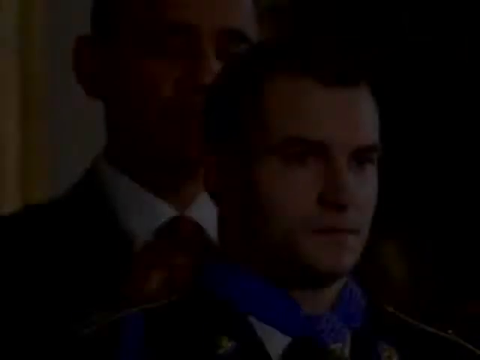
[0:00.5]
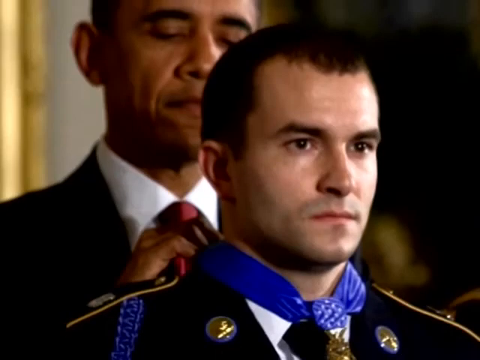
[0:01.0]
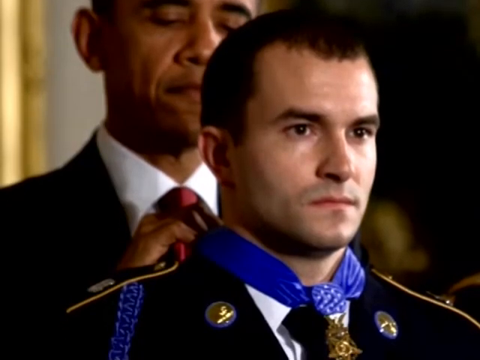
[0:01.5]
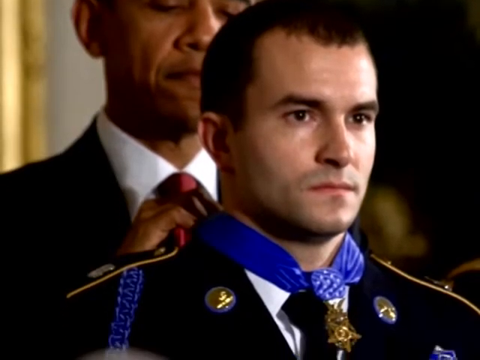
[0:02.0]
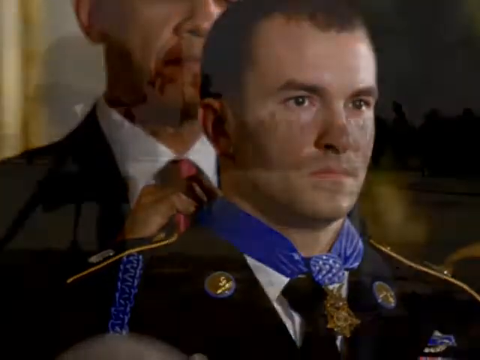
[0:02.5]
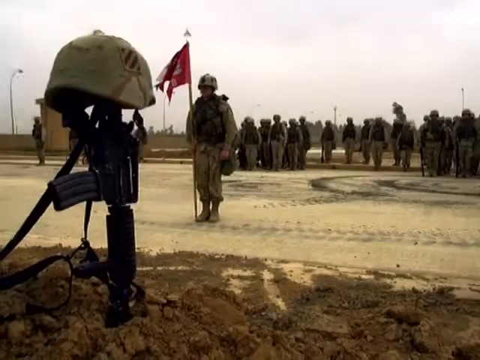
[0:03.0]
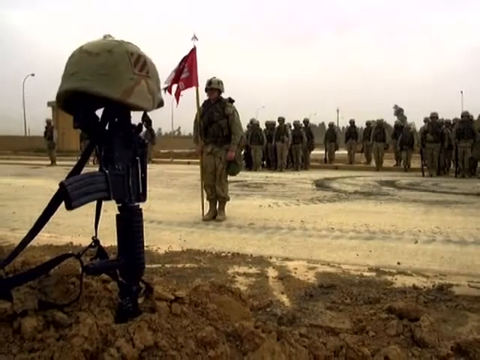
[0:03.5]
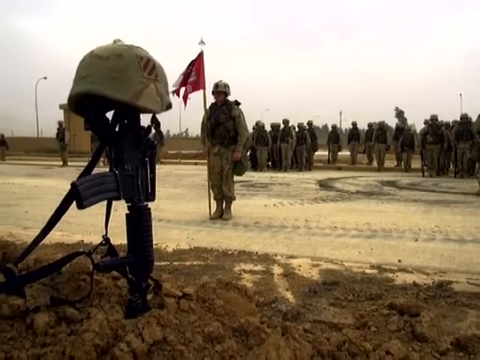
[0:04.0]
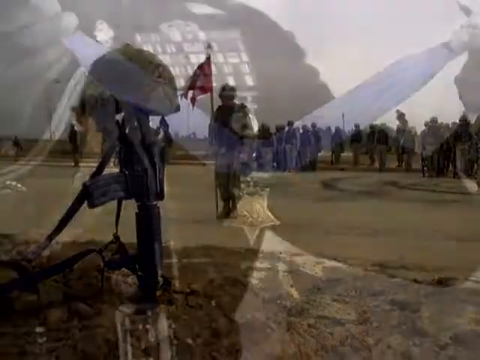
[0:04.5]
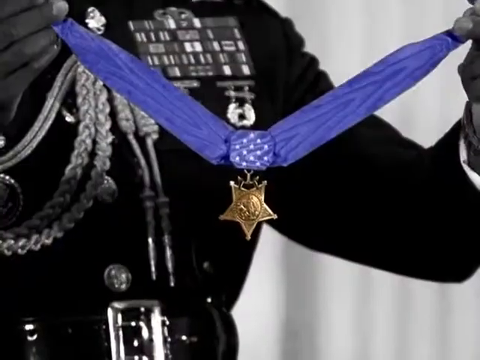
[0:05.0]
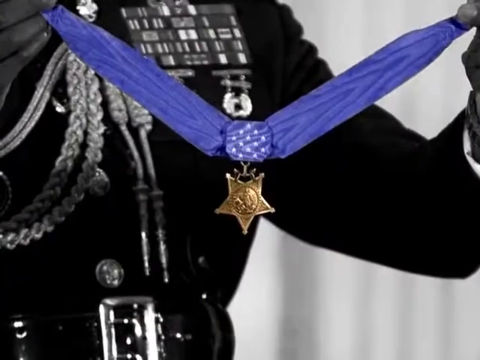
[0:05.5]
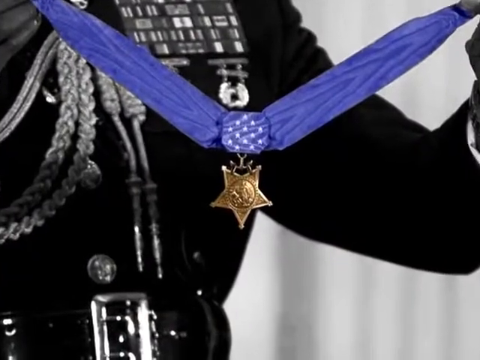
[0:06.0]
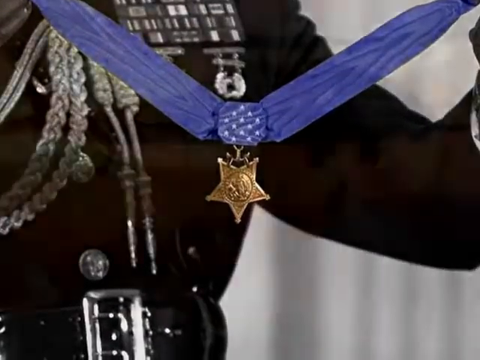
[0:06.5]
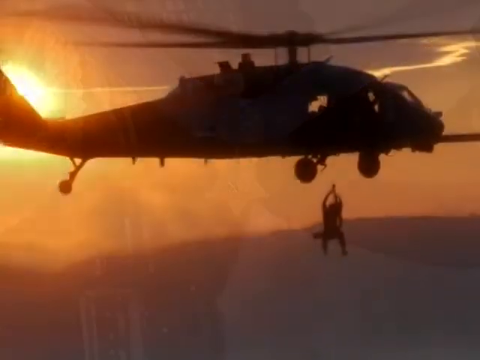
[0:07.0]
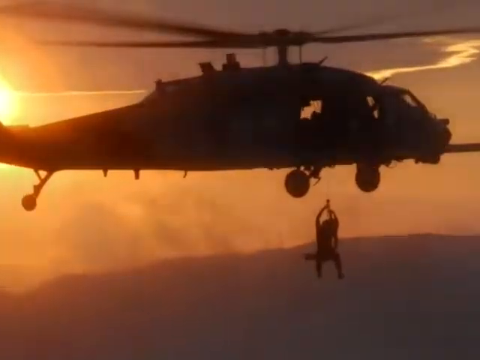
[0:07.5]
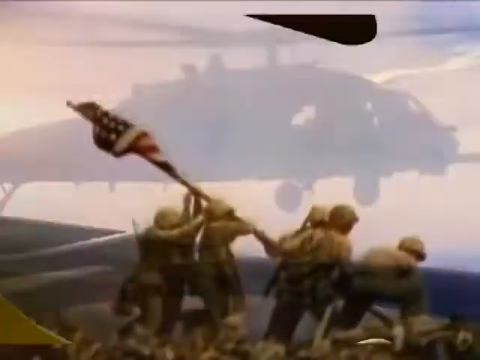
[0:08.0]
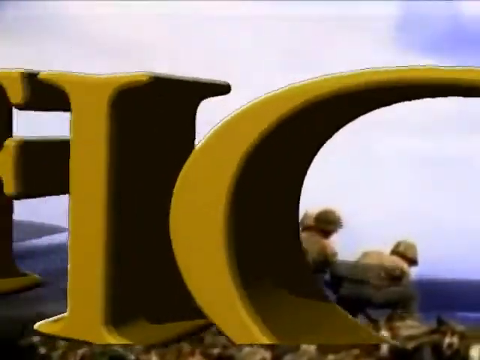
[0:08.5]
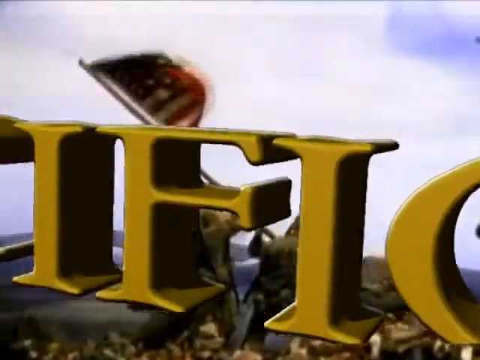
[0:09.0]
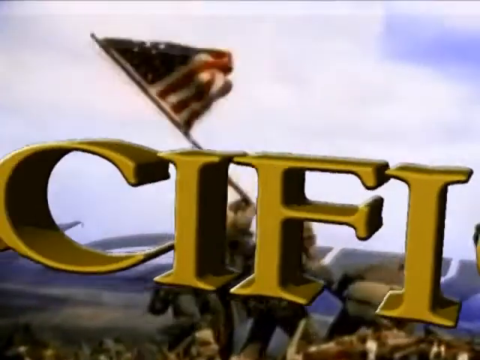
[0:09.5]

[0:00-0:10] A picture shows a man with Obama standing behind him, putting a blue ribbon-like item on the man's throat; the man seems as if he might be in the military. Next comes a photo of some military men, along with a gun and a hat, which looks like a tribute of some kind. A close-up shows the blue ribbon with a star-like medallion attached to it. A photo follows of a black helicopter with someone seemingly hanging from it. Text then pops up on the screen, and the footage appears to show military men walking with the American flag.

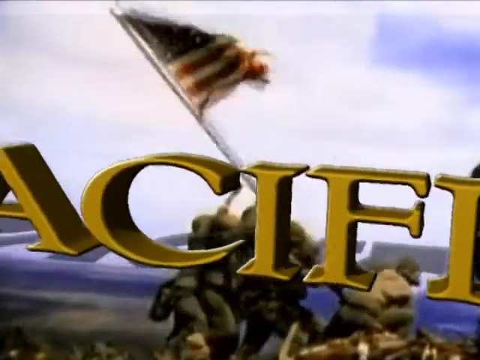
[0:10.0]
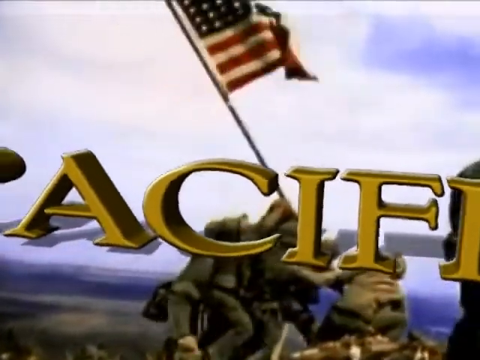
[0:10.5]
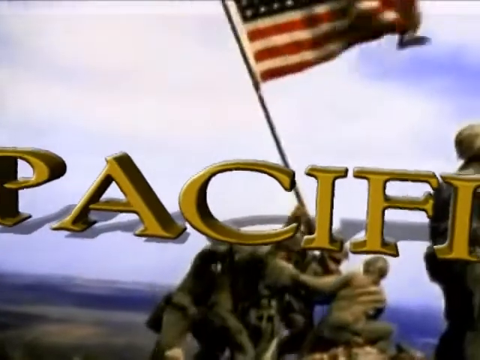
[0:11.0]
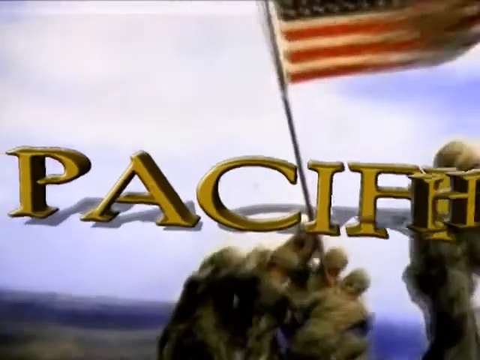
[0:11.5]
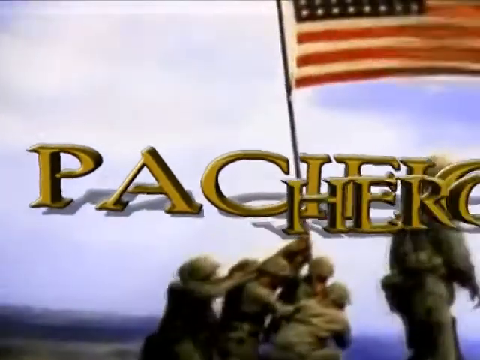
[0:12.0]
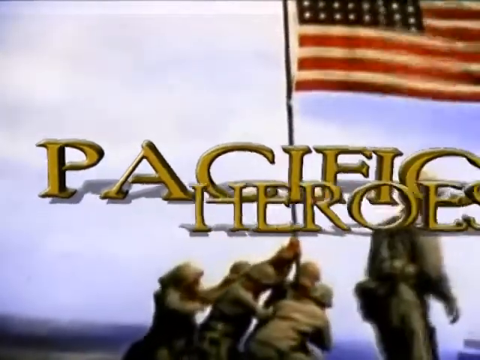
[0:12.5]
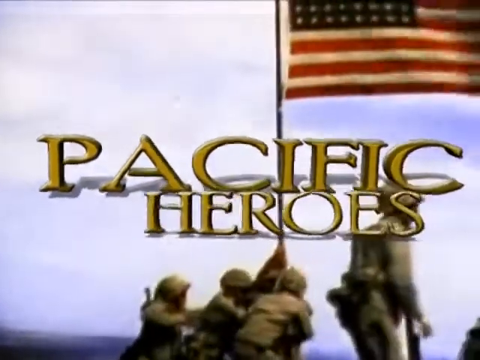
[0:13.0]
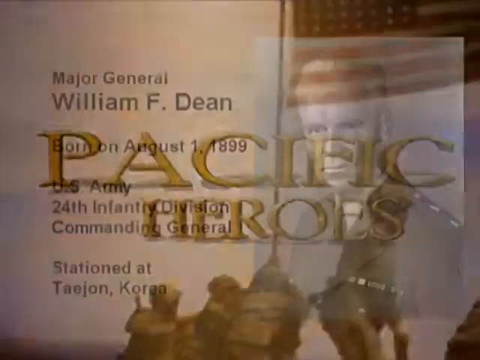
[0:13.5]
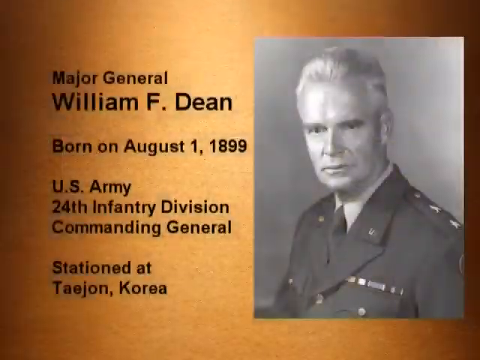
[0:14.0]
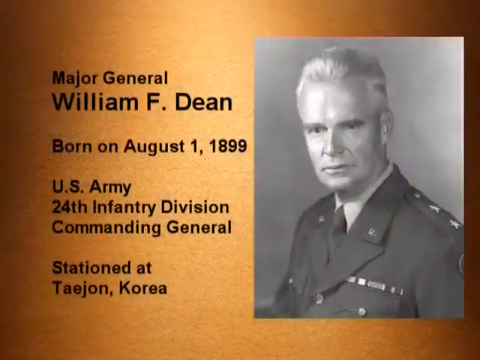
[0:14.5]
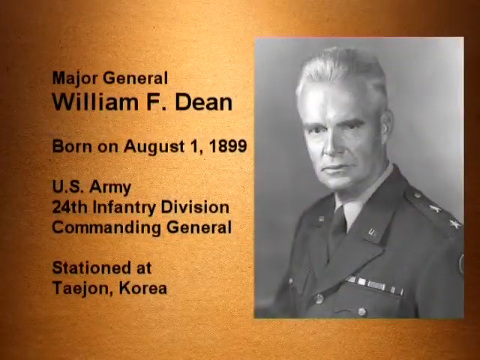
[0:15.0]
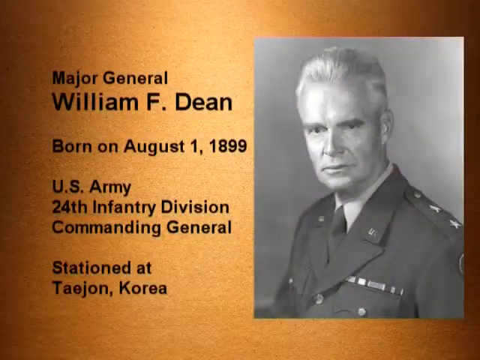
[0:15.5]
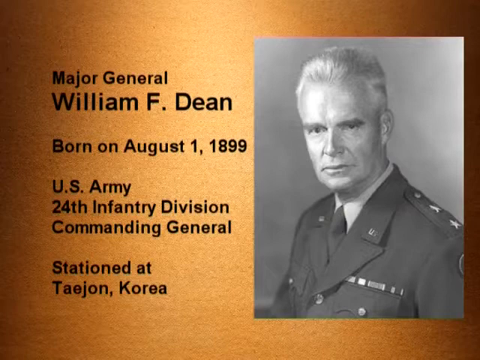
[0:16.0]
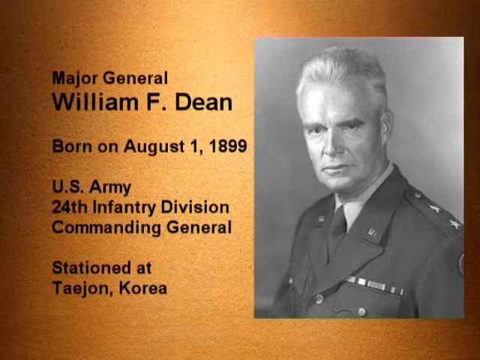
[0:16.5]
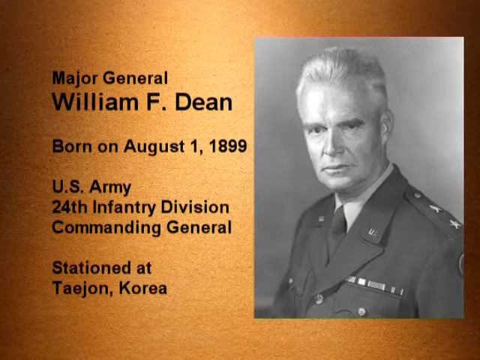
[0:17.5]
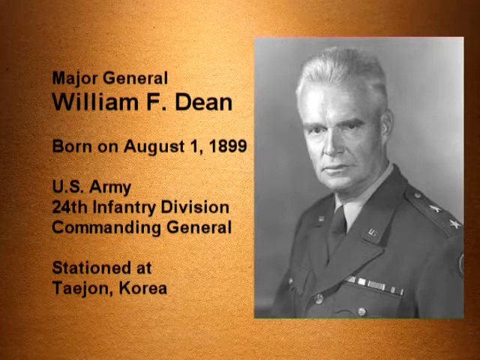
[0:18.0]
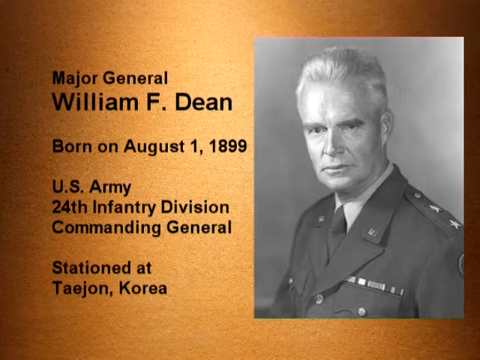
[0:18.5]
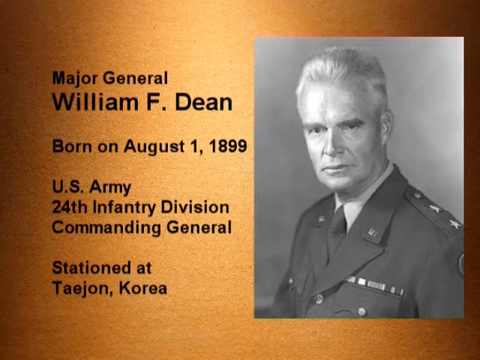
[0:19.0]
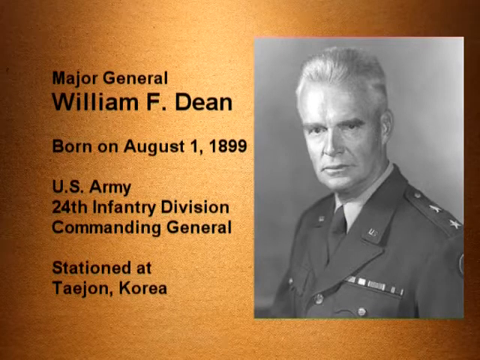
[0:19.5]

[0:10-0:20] The American flag appears as some men try to raise it, and gold text reading "Pacific Heroes" appears with a somewhat embossed look. Next, an orange background shows black text reading "Major General William F. Dean, born on August 1st, 1899, U.S. Army 24th Infantry Division Commanding General, stationed at Daejeon, Korea." A black and white photo shows this man, with short, somewhat blonde hair, wearing his military uniform and looking pretty stern.